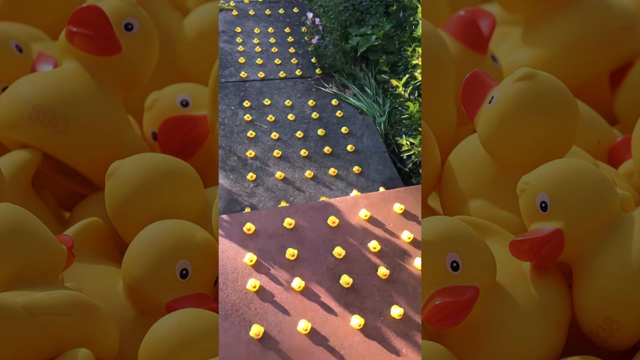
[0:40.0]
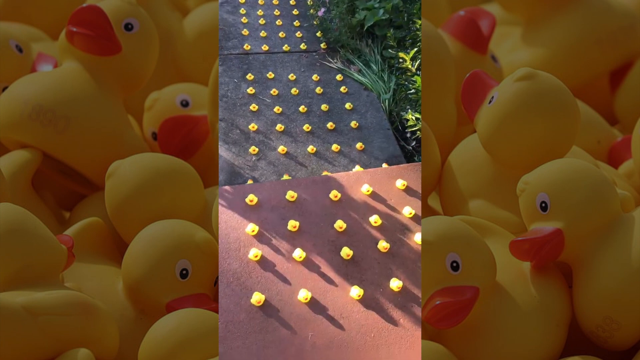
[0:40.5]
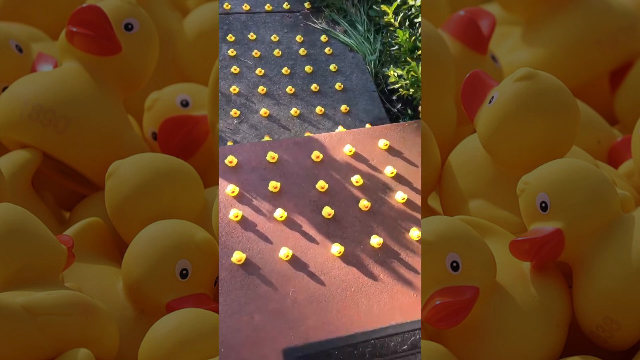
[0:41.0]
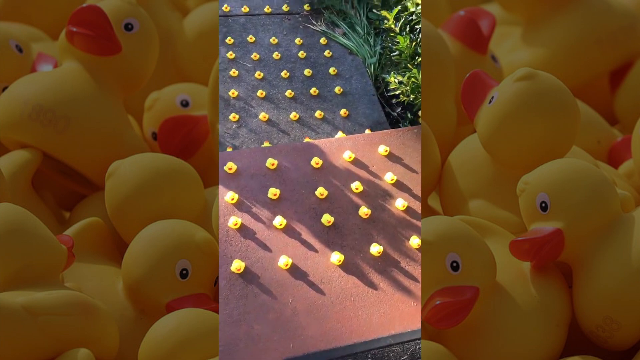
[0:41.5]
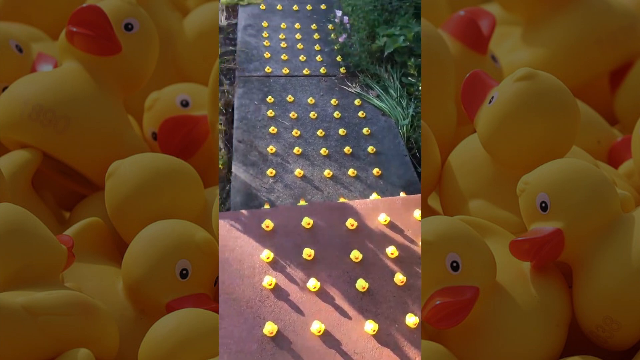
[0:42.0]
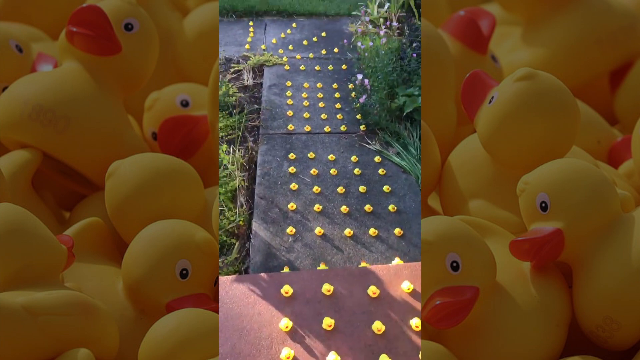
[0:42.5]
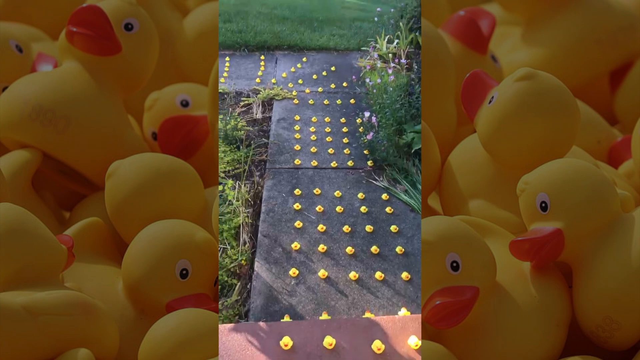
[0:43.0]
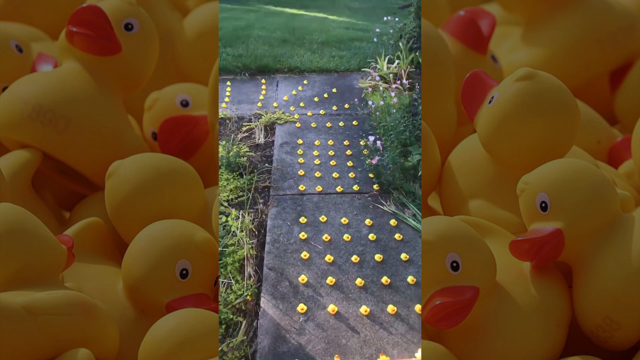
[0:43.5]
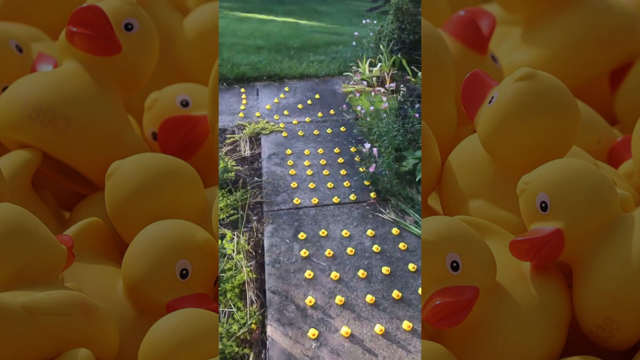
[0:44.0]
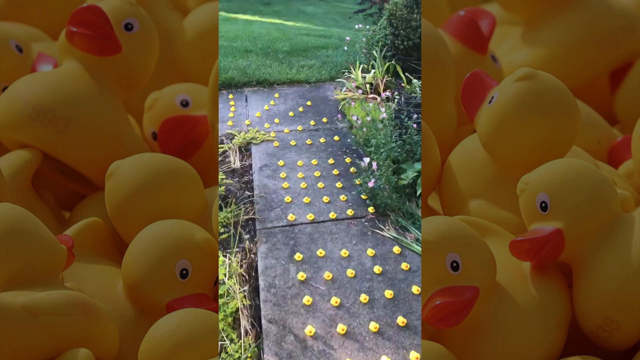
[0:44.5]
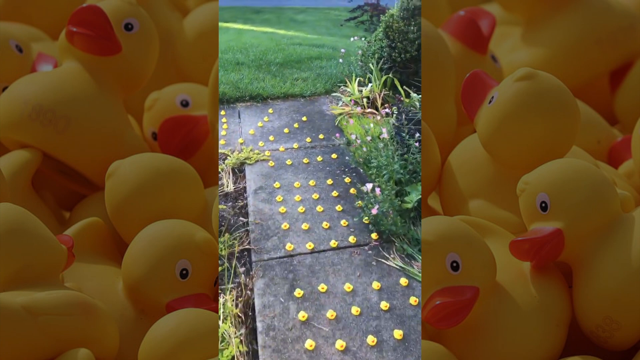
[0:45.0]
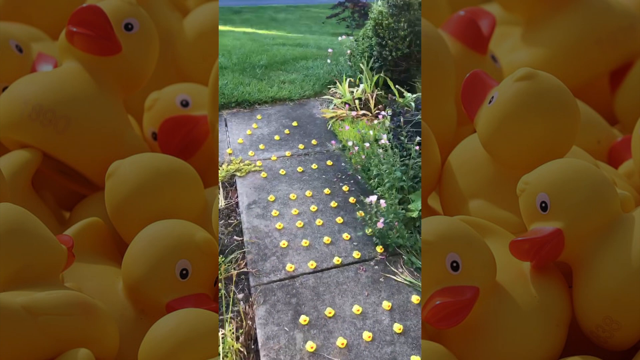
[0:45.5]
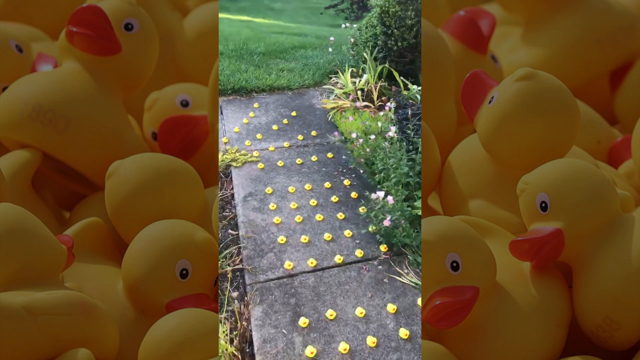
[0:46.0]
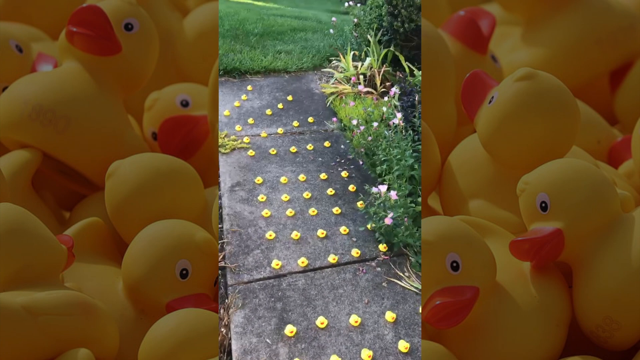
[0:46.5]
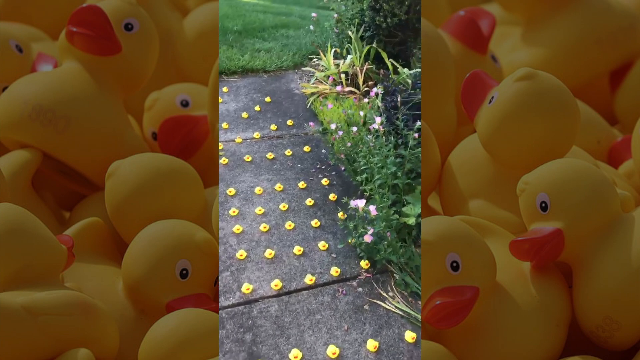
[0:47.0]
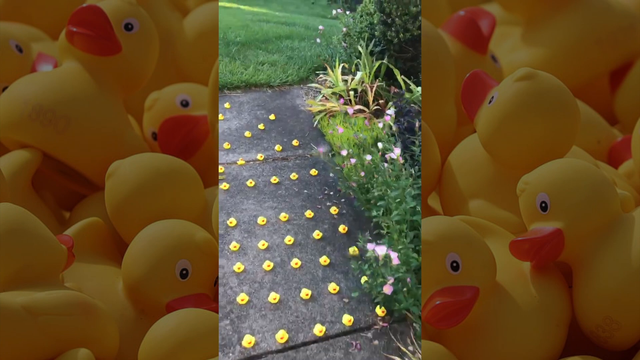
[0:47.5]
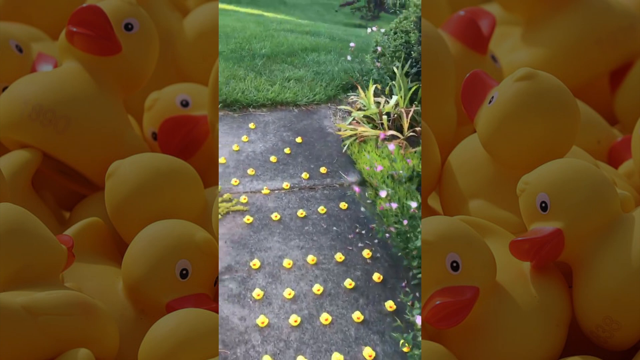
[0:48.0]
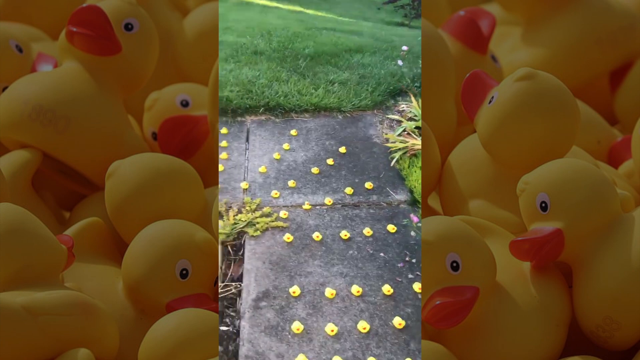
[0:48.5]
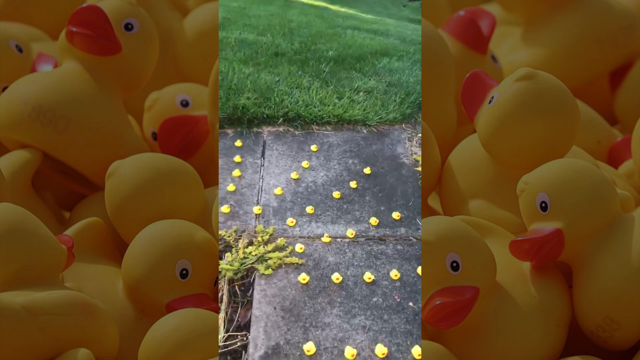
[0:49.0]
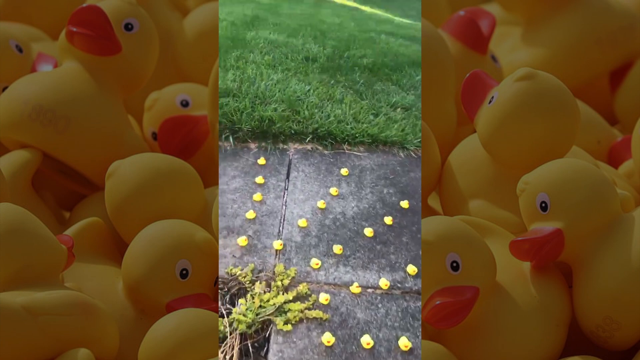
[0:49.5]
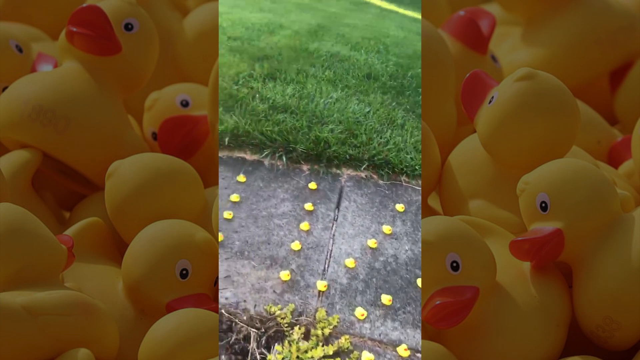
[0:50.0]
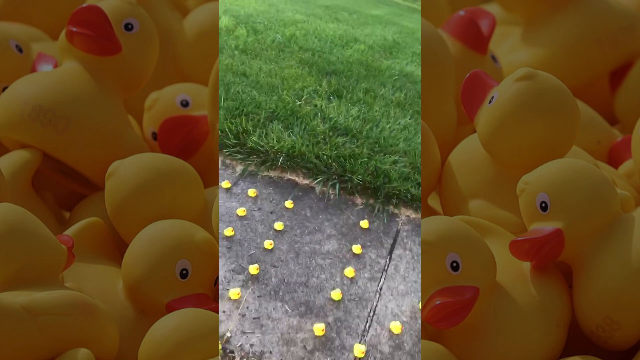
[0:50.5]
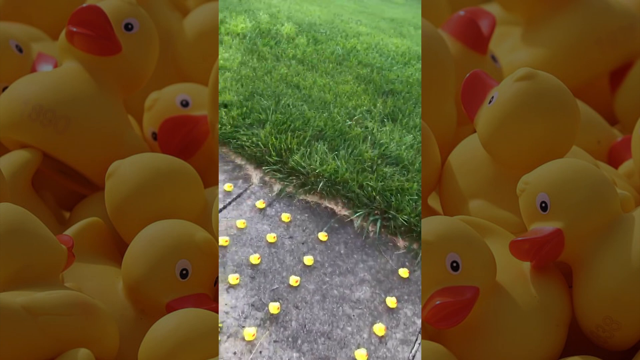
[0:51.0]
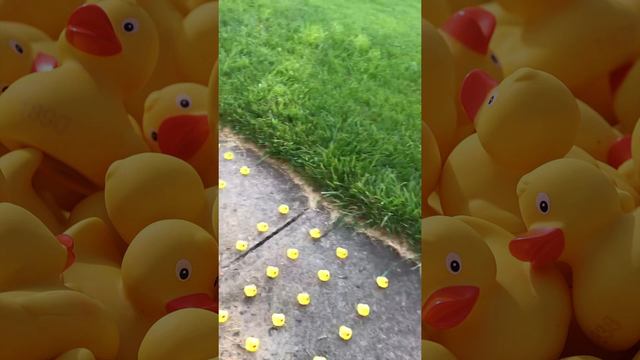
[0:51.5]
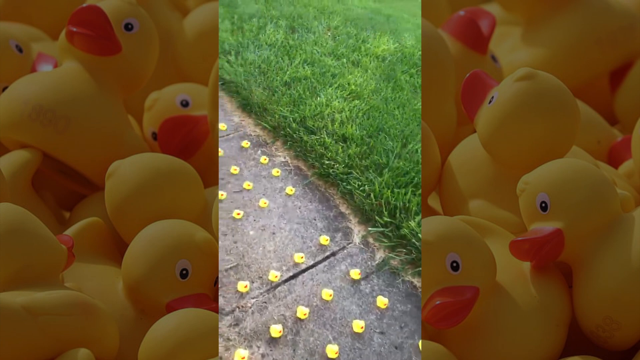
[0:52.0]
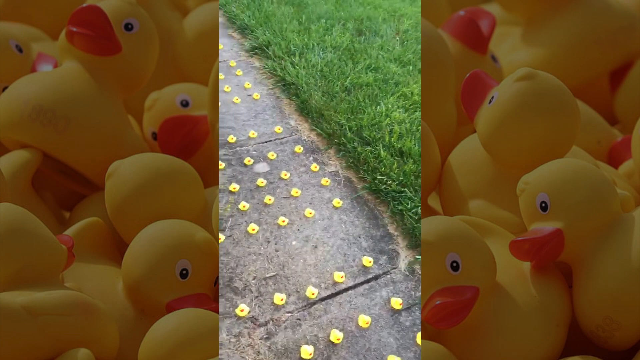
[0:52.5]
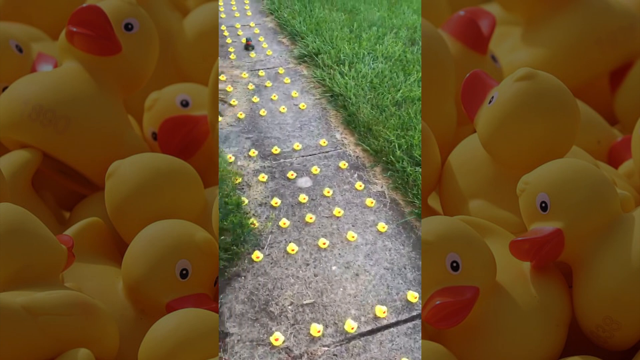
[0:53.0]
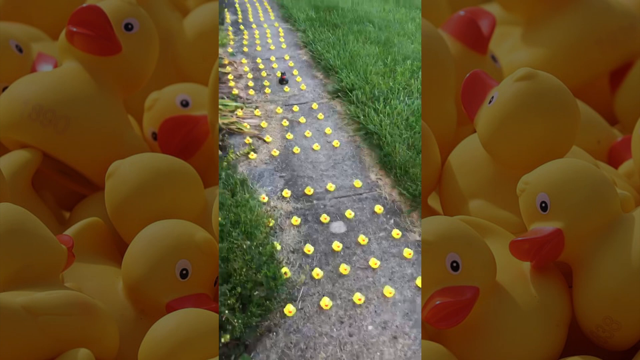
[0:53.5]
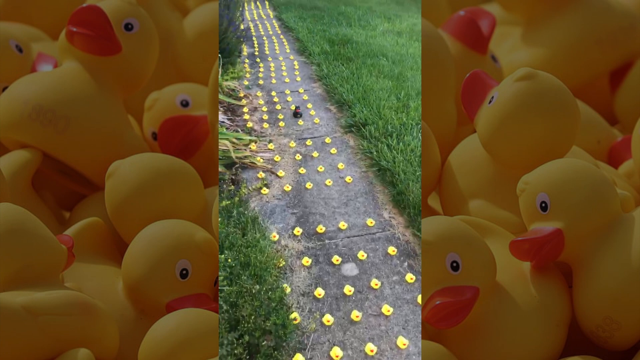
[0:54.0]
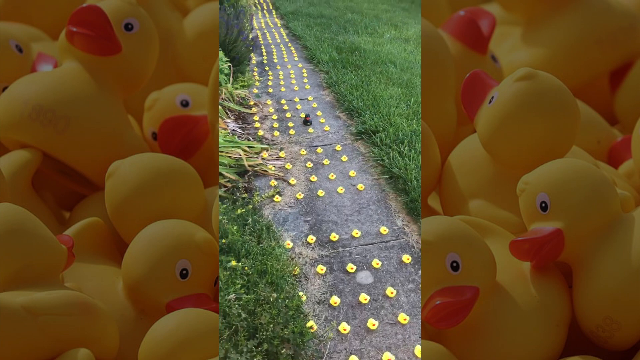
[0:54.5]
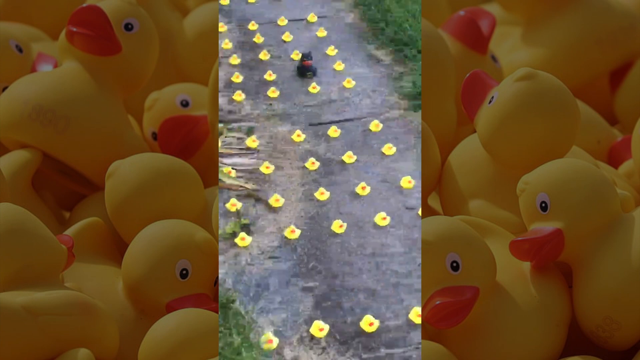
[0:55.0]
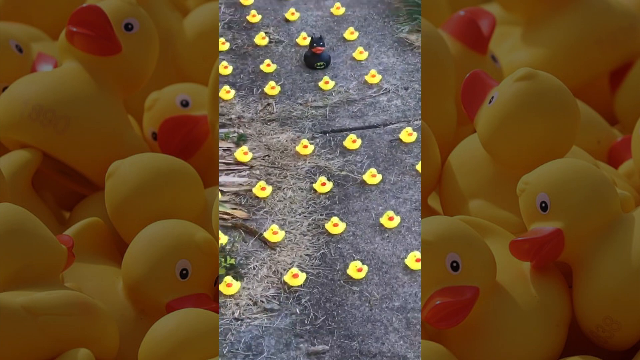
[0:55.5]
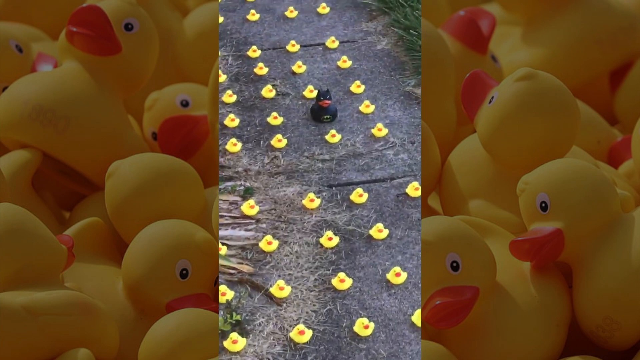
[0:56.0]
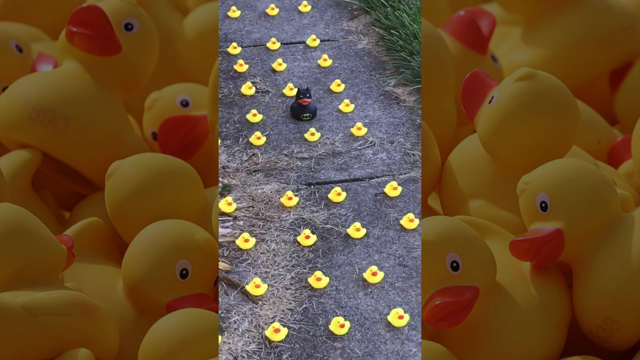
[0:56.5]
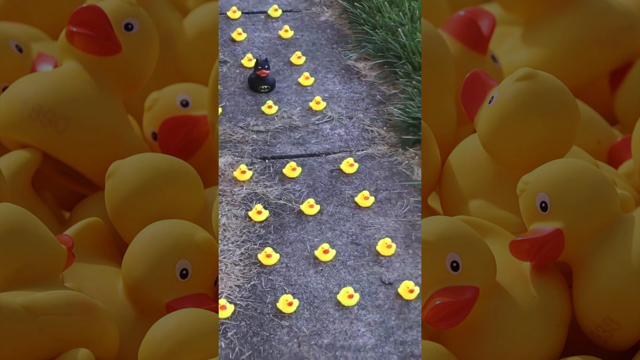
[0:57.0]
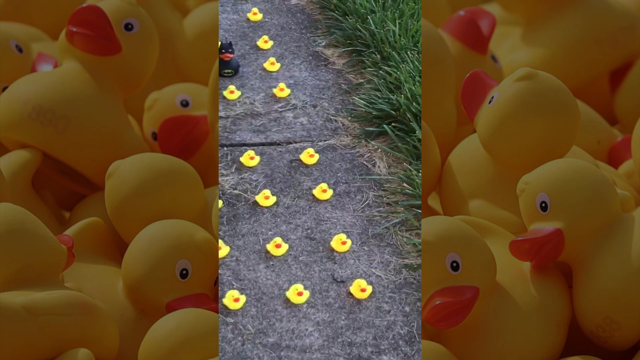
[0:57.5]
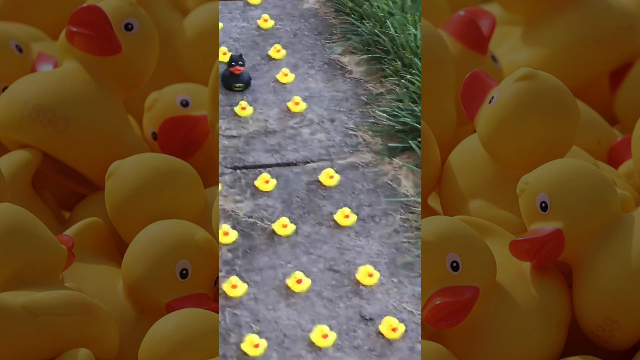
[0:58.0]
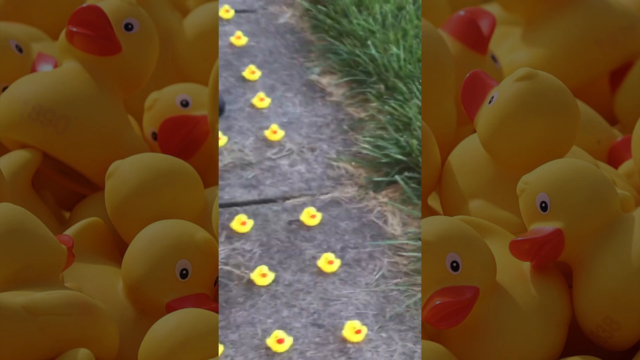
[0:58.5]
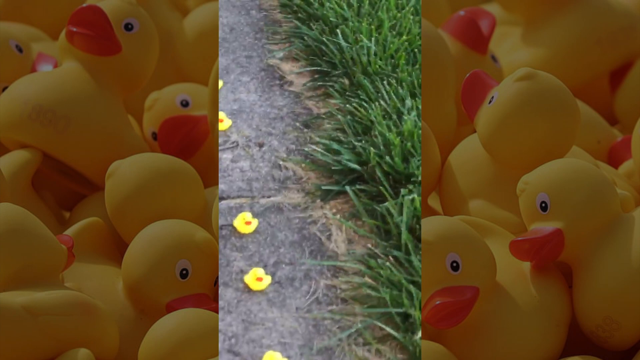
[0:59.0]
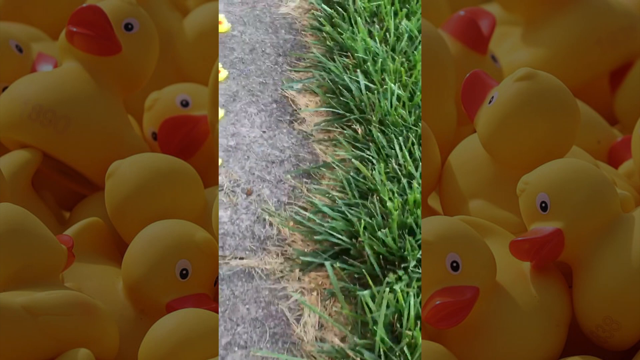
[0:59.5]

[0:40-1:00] The background of the bunch of rubber duckies appears again, with a video in the center. In the video, the army of rubber duckies is again lined up, apparently in groups of six. Somebody appears to be walking, and the video moves forward as the person walks down the walkway past the groups of six rubber duckies. Behind them are grass and some plants on the right-hand side. The person takes a left-hand curve on the walkway, and the lineup of rubber duckies continues. The person zooms in a little to a black rubber ducky, much larger than the others, that almost looks like a Batman rubber ducky; the Batman symbol is on its front. The person continues walking toward the black rubber ducky.